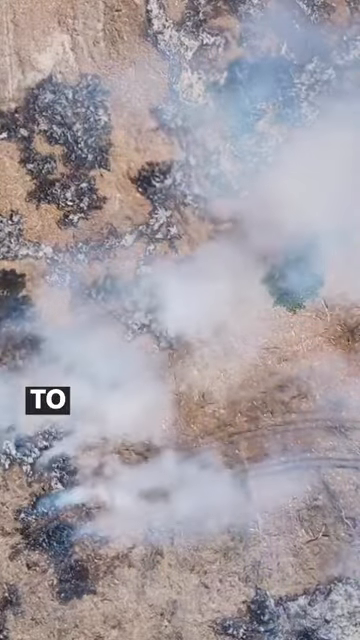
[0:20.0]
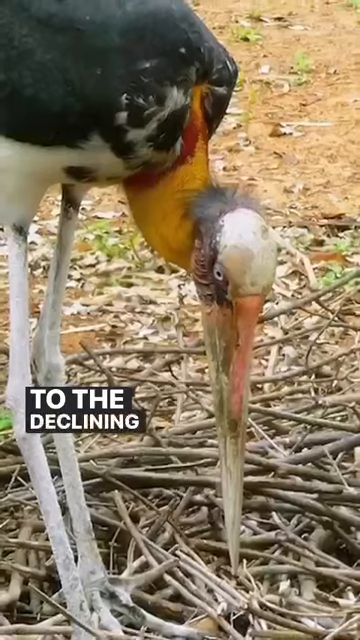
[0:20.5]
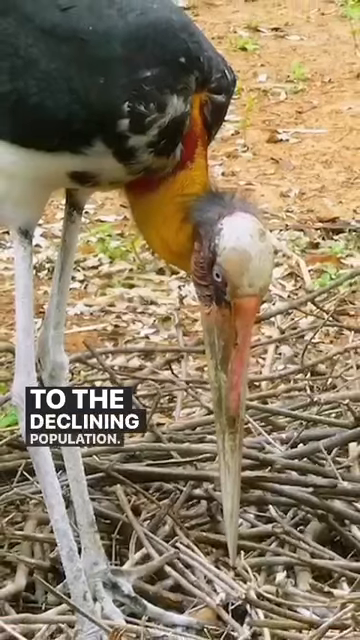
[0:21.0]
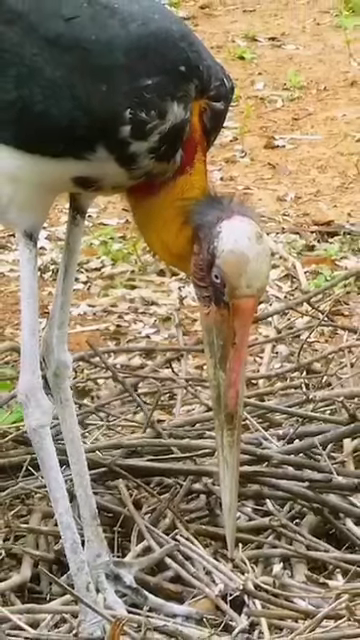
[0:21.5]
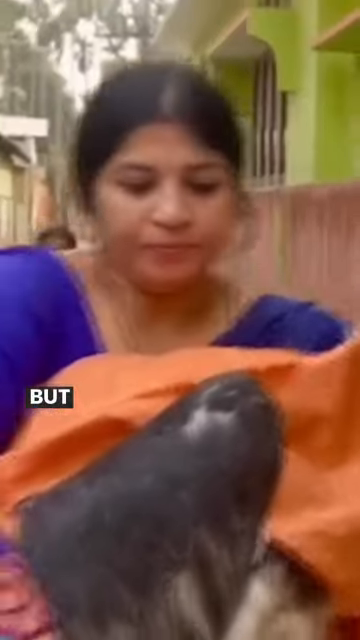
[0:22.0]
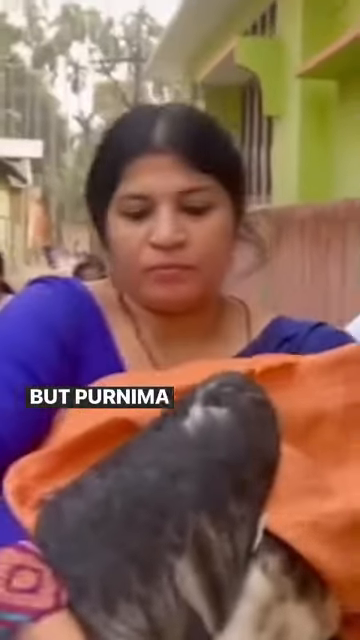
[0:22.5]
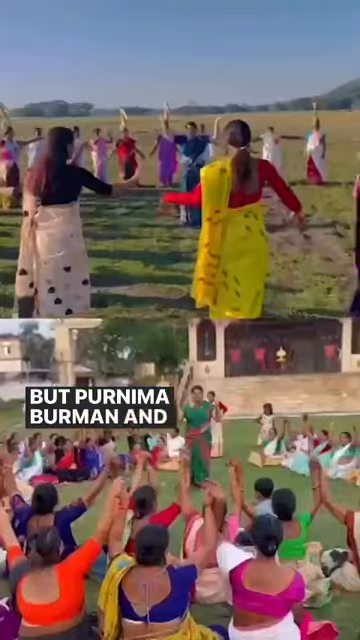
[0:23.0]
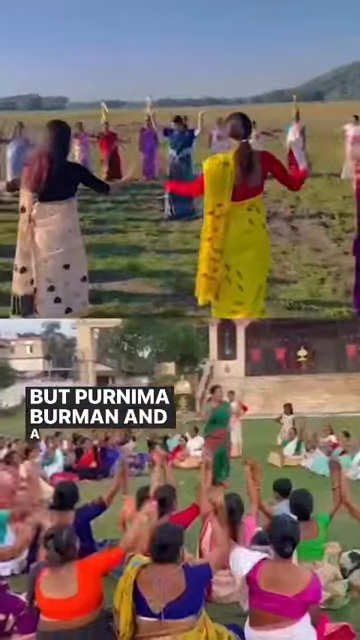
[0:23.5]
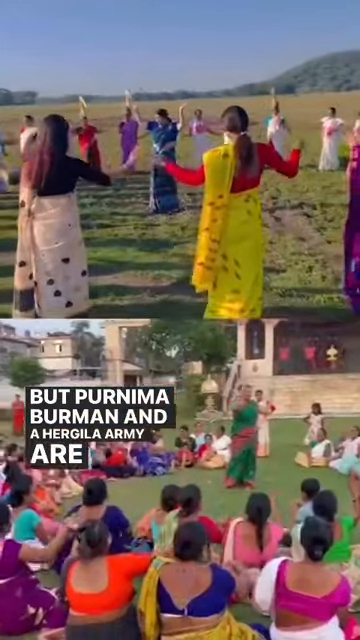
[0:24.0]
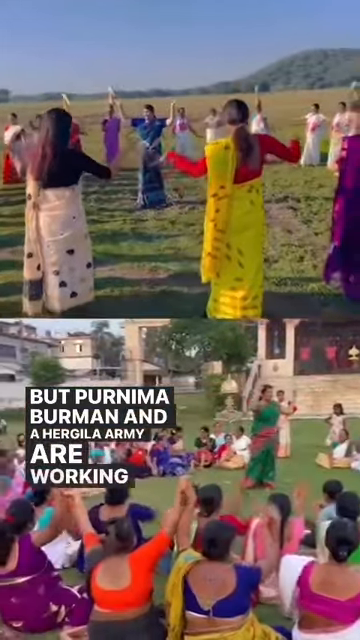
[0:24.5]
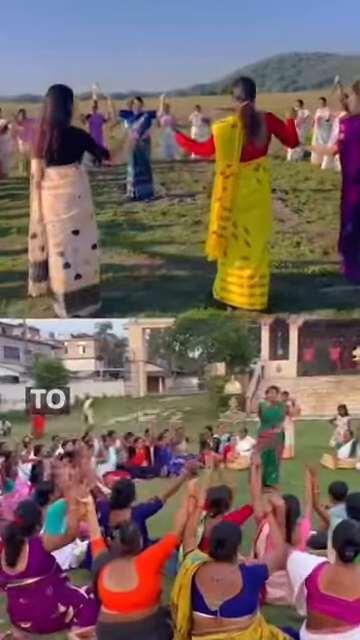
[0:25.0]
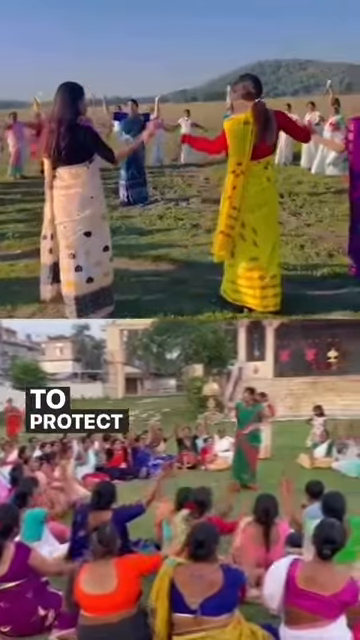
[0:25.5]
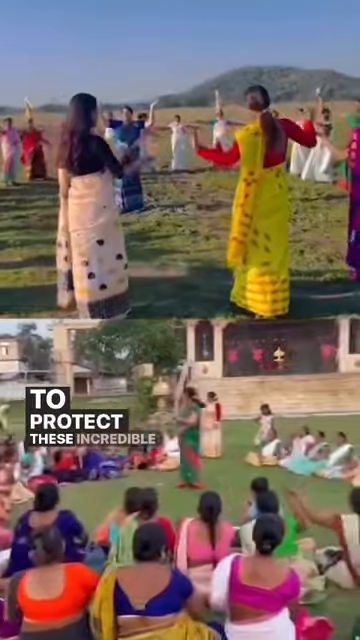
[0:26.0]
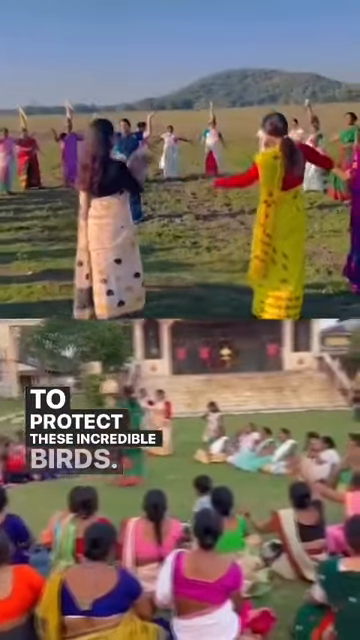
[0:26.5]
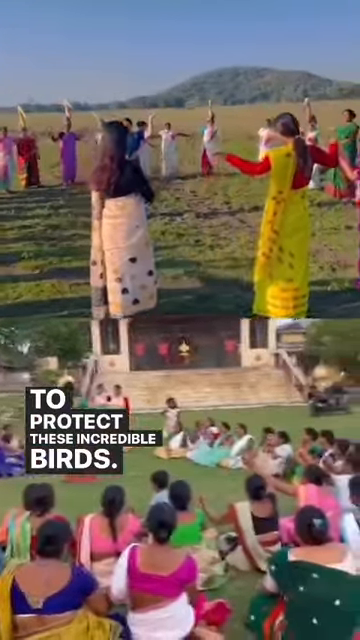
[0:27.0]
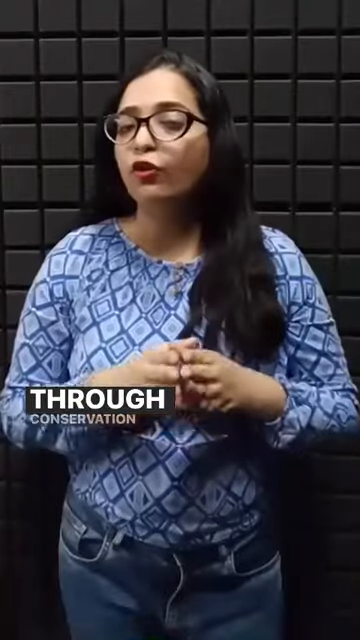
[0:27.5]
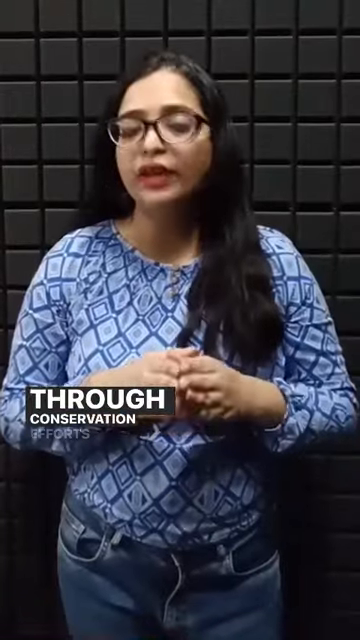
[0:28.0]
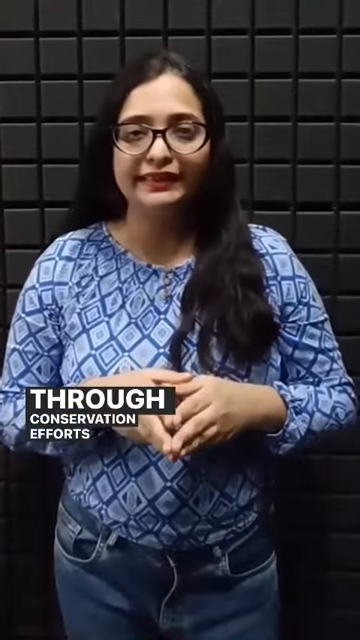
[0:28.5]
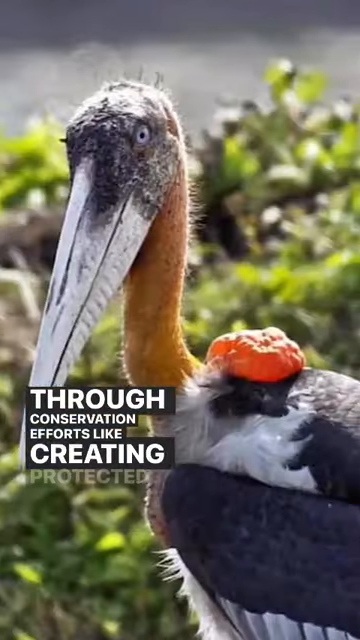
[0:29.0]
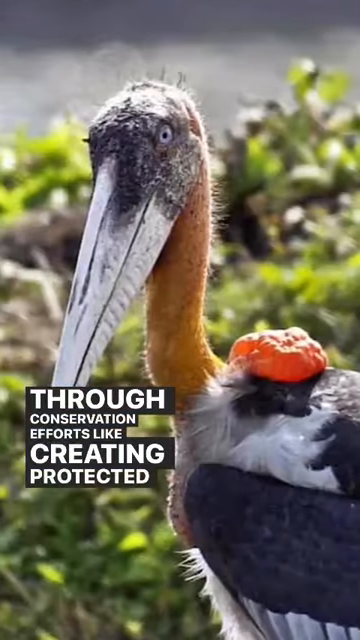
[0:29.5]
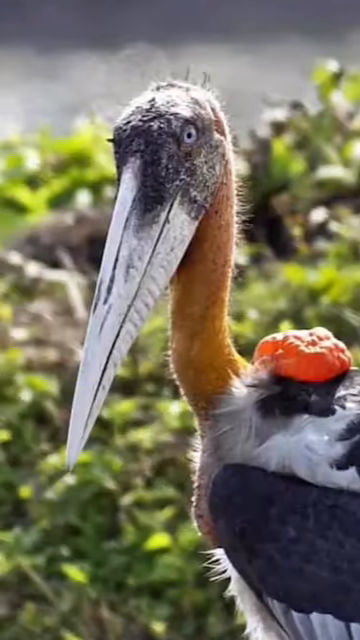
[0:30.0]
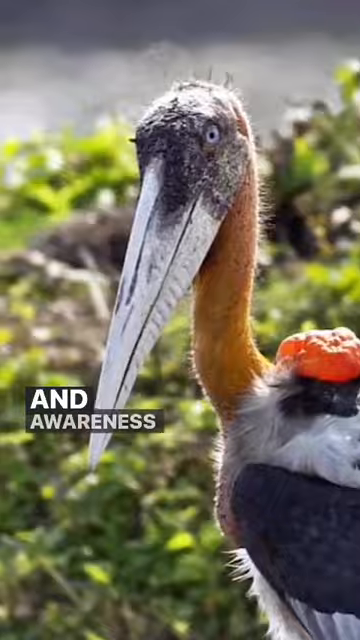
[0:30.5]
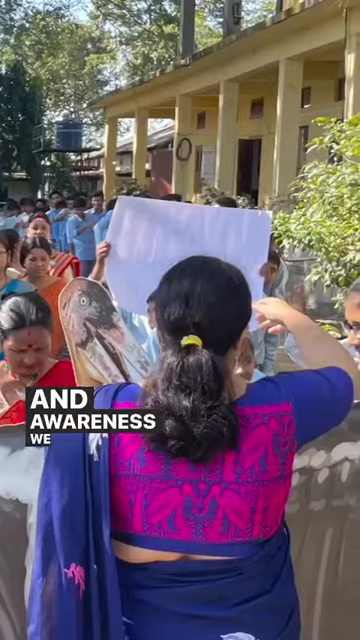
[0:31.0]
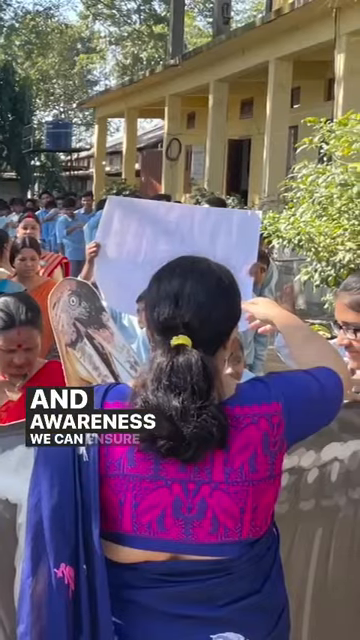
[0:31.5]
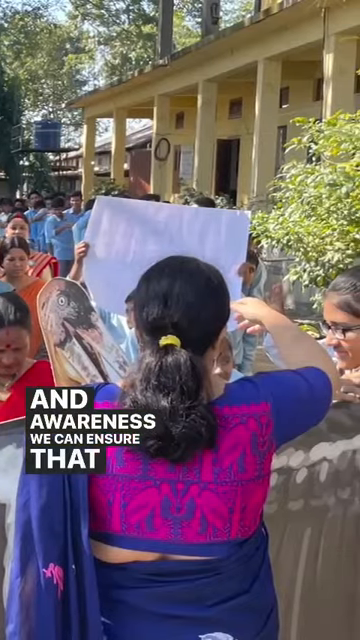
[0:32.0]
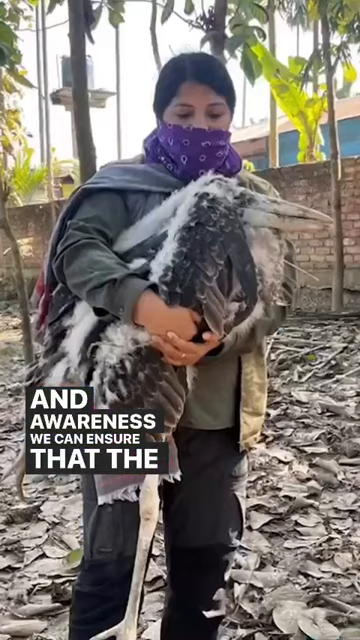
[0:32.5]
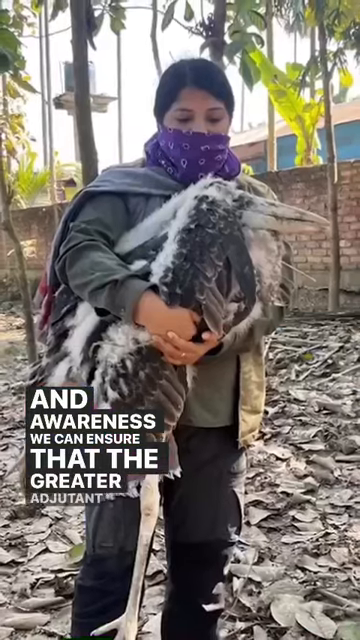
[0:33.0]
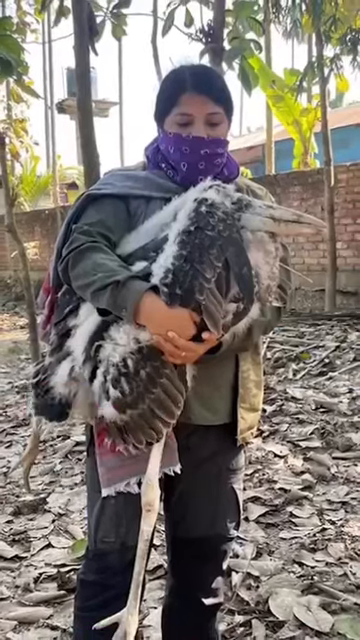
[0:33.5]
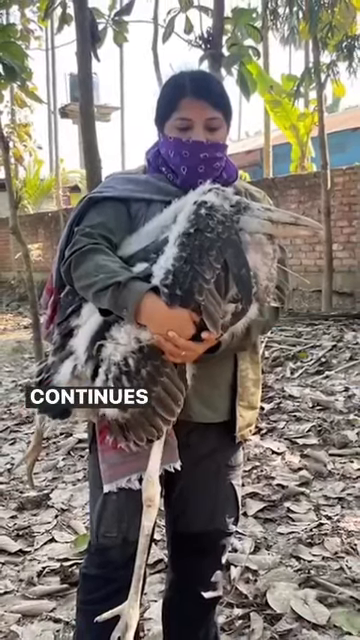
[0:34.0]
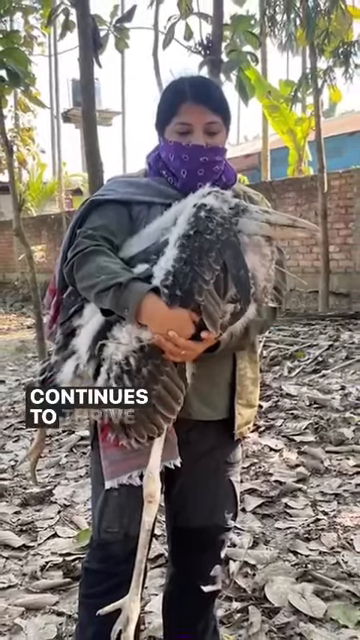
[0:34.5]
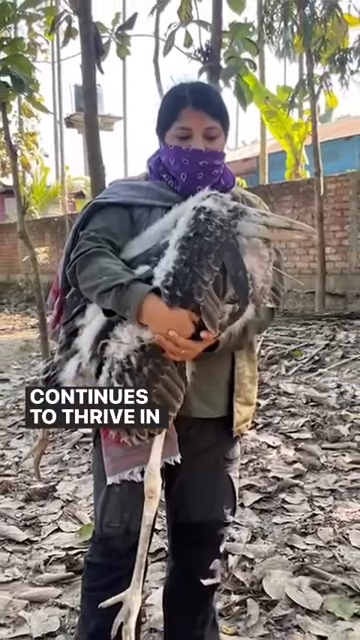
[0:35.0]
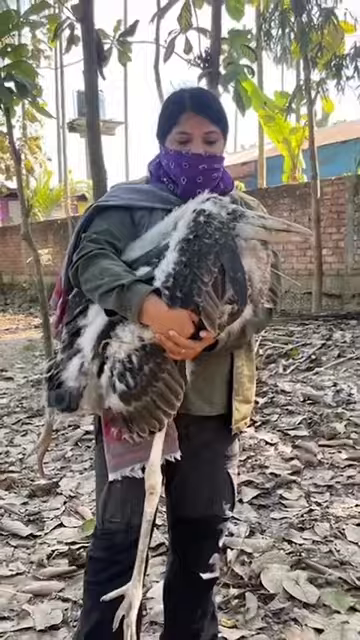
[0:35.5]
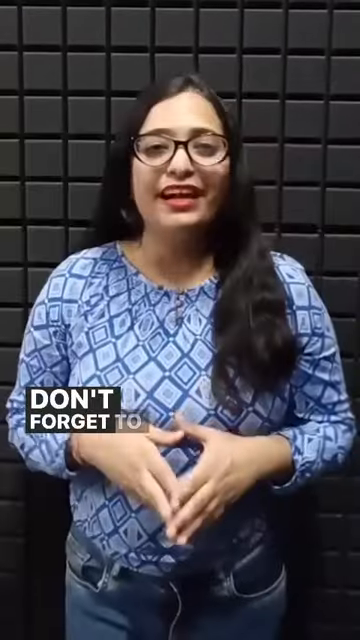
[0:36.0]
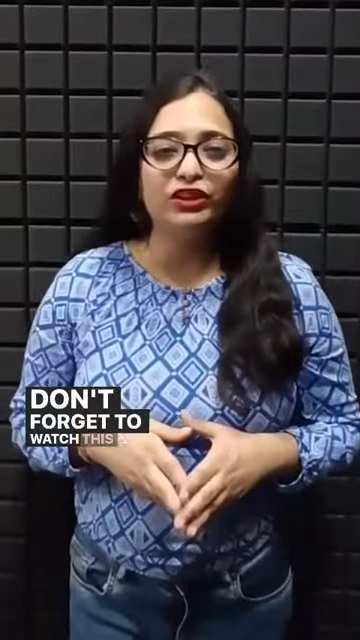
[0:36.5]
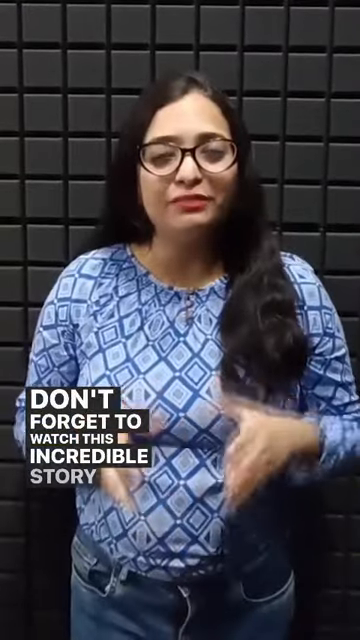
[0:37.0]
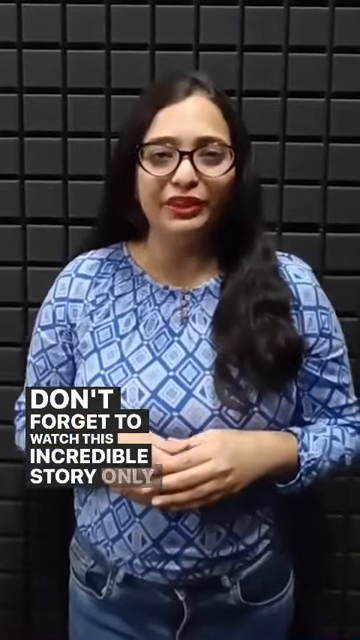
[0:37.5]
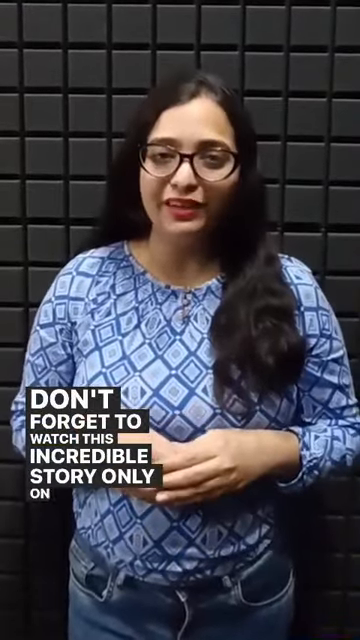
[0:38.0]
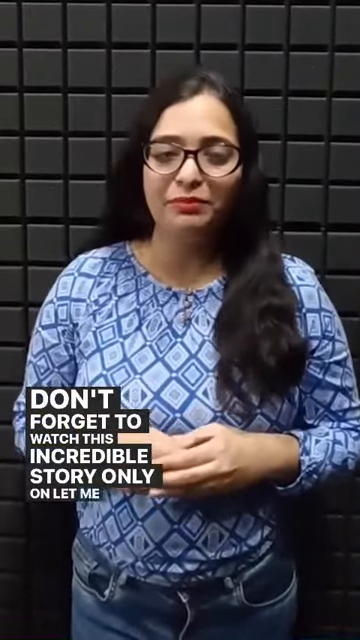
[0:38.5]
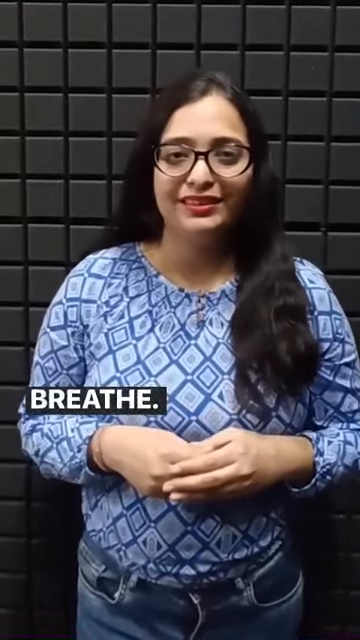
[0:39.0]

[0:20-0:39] One of the adjutant storks appears to be eating something on the ground. A woman appears, seemingly carrying something. Then a group of women is shown, some of whom seem to be dancing in a field, followed by another group of women who are seated together. On-screen text reads: "but Purnima, Berman, and a Hargila army are working to protect these incredible birds through conservation efforts like creating protected areas and awareness. We can ensure that the greater adjutant stork continues to thrive in India." A woman with her face covered holds one of the storks in her arms. Text reads: "Don't forget to watch this incredible story only on Let Me Breathe."